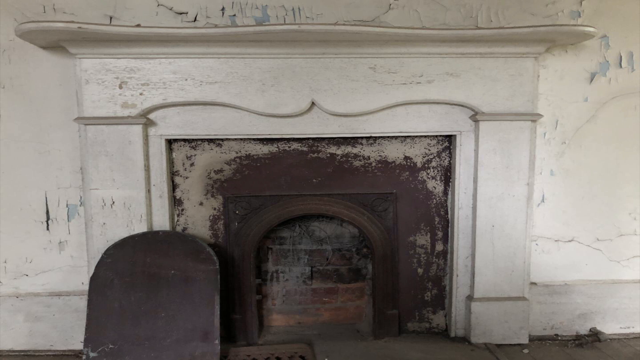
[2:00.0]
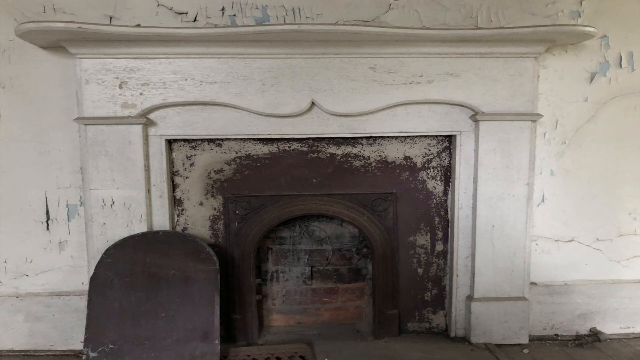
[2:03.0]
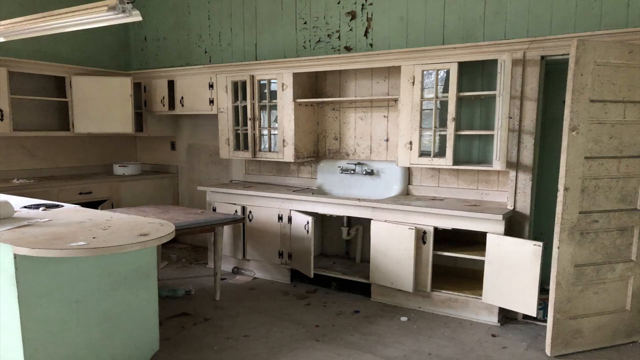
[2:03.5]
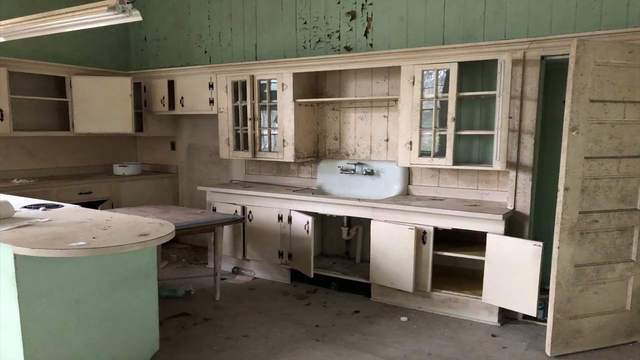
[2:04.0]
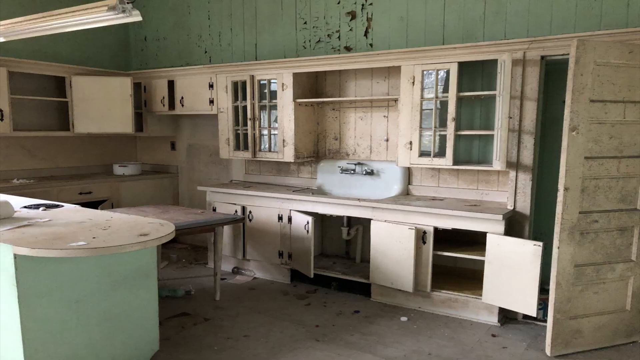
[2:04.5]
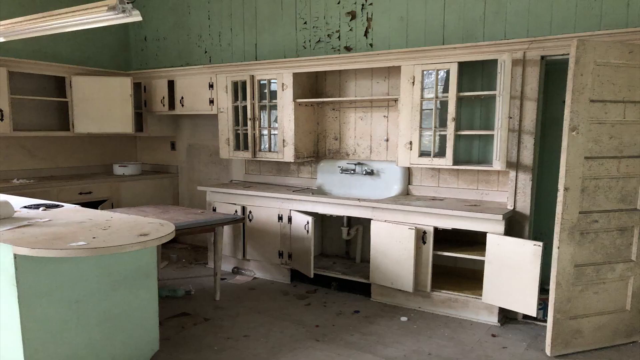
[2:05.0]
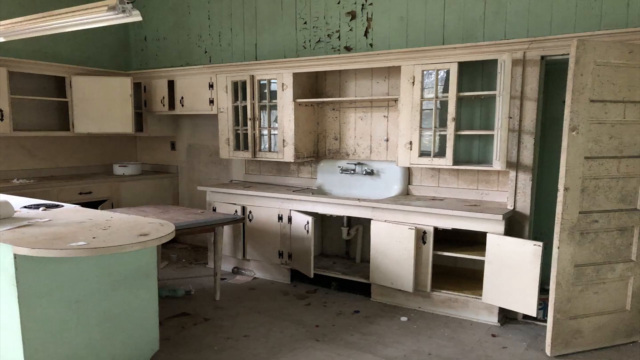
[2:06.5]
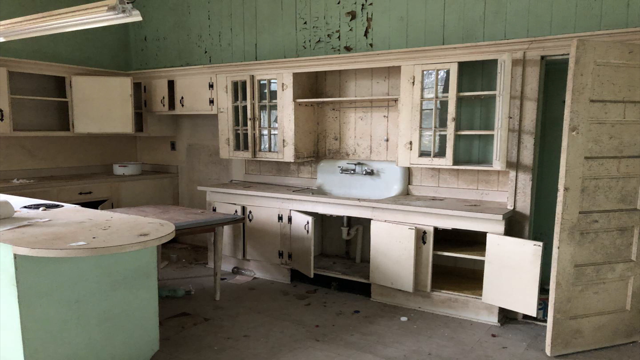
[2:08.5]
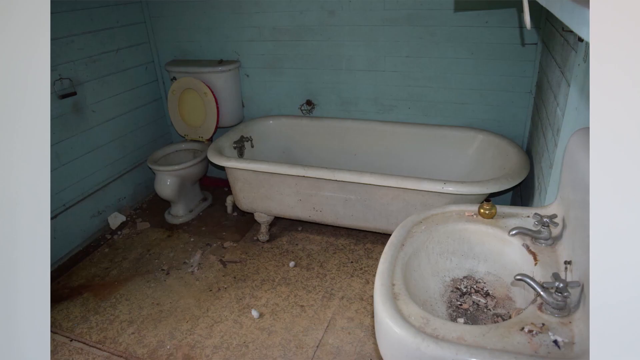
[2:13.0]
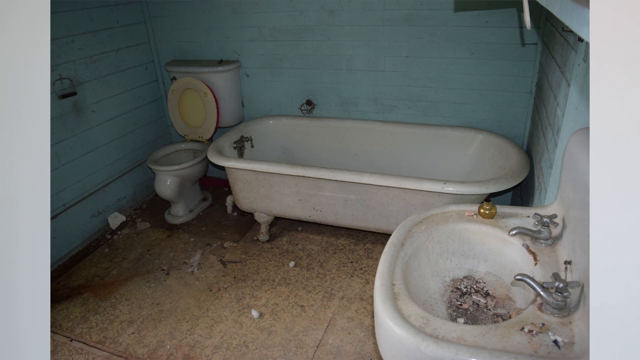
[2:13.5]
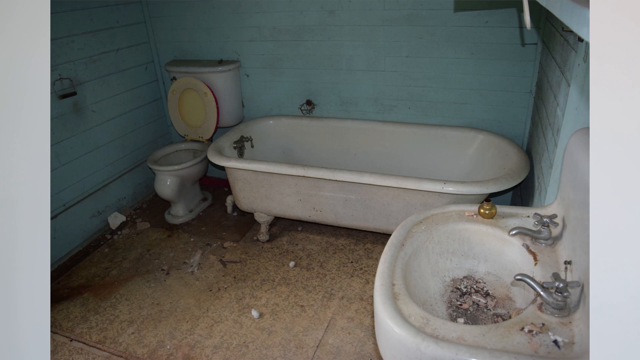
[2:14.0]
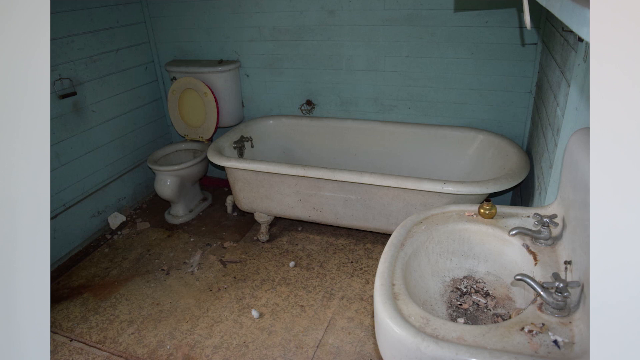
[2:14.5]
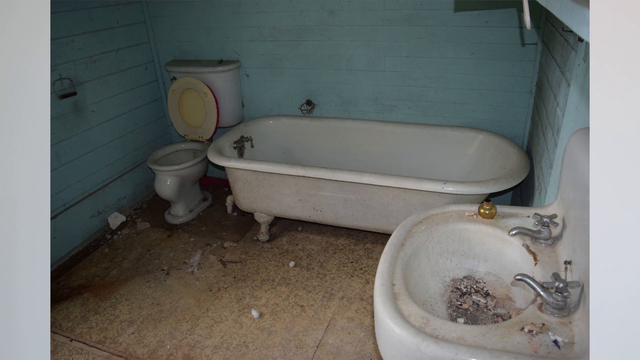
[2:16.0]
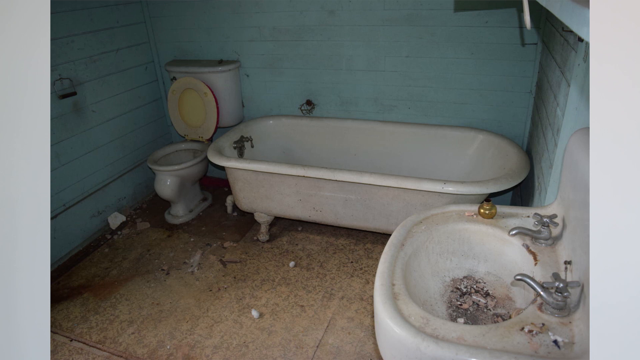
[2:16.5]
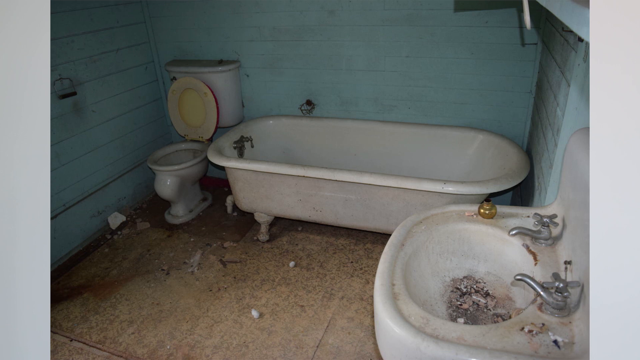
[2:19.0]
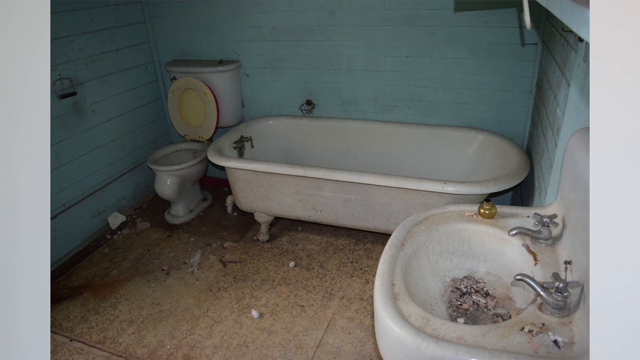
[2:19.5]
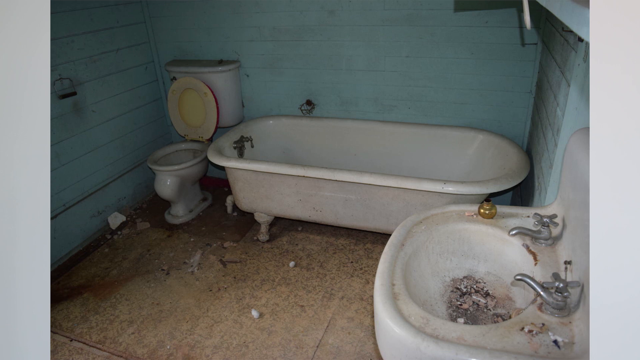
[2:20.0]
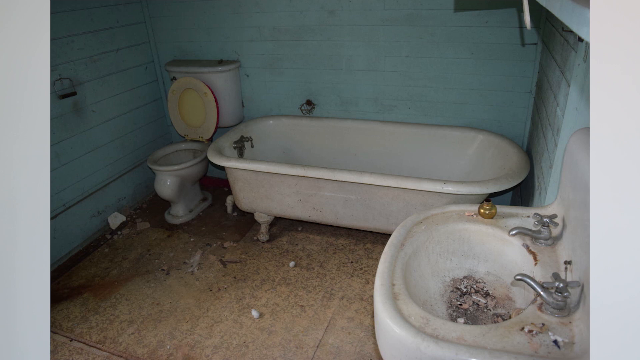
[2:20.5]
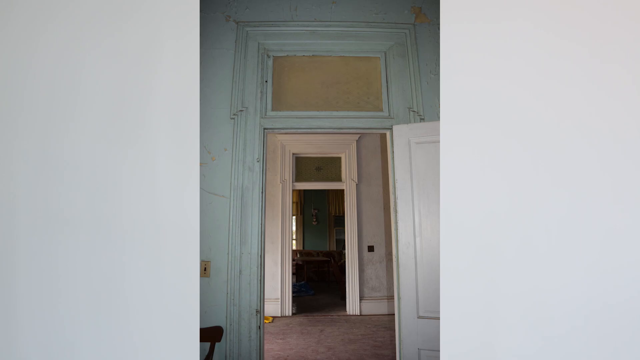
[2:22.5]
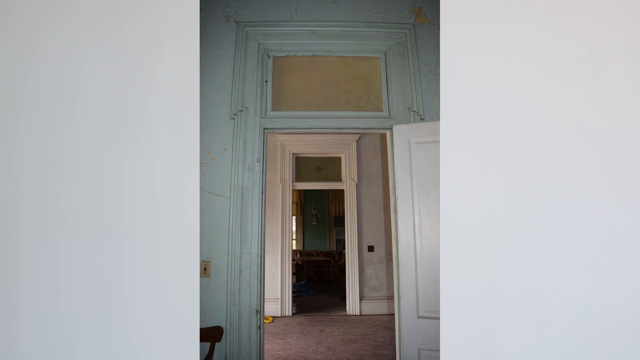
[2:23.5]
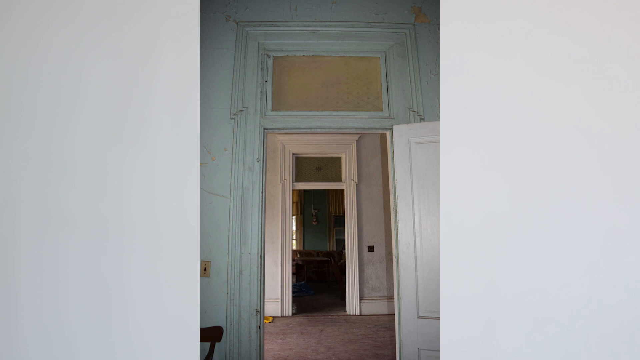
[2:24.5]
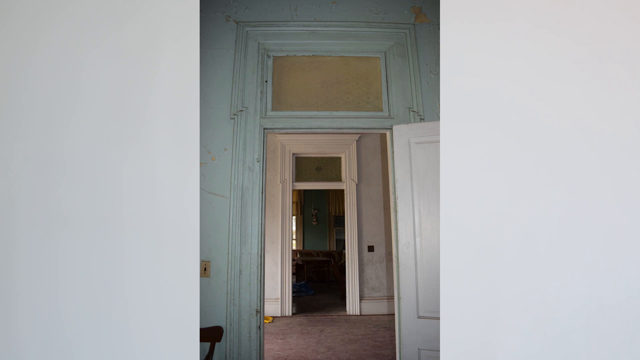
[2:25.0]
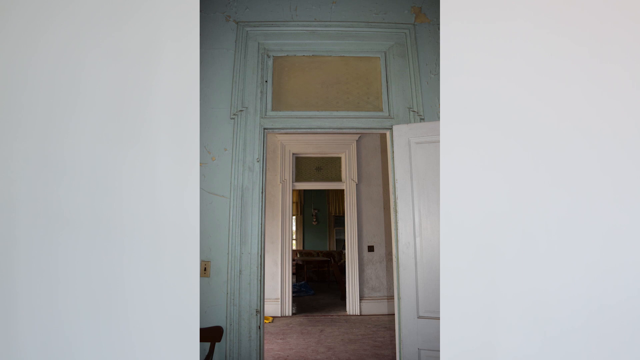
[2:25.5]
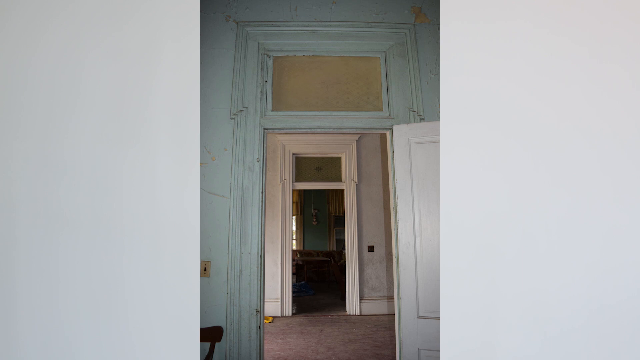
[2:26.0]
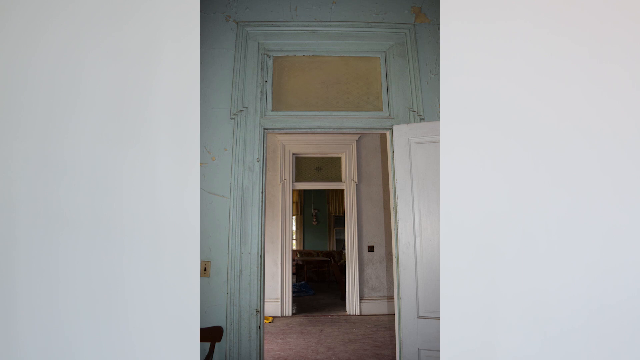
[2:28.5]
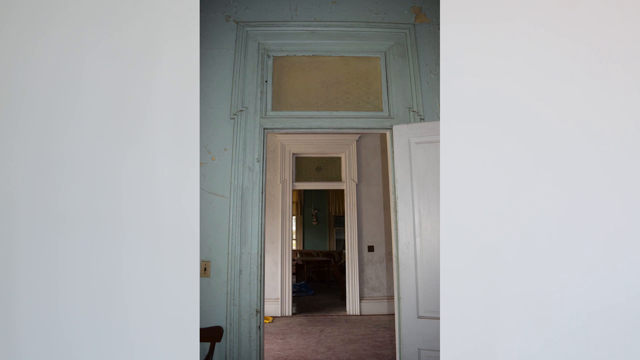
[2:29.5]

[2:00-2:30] A picture shows a fireplace in a white wall with a white mantle. Around the square fireplace, the brown frame has a lot of chipped and worn-down paint. Inside, the background is a wall of bricks, and placed aside to the left of the fireplace is what looks like a dark brown door or cover resting against the wall. Next is a picture of a large kitchen with green walls and tan countertops and cabinets. There is a large long white sink and about six cabinets under the long countertop it is attached to; some cabinet doors are completely open, while on others just one door is open or cracked. Cabinets with wooden frames and glass windows are above the sink to the left and right, with more cabinets to the left. There seems to be a square brown wooden table standing in the middle of the kitchen, and to its left is an island with green sides and a white rounded rectangular top. The kitchen looks very worn down, with a lot of peeling paint, some debris on the floor, and walls that look kind of dirty. Then comes an image of a bathroom, a small square room with light blue brick or paneled walls. There is a white bathtub standing on four small legs, a small white circular sink to the right that looks like it has dust or rocks sitting in the bottom, and a small toilet to the left of the bathtub with its seat up; the seat looks kind of yellowed. What look like broken rocks or bricks are sitting on the floor. Finally, an image shows a doorway in a very light bluish-white wall. There seems to be a square window above the doorway that looks filled in with light brown cardboard. A white door is open in the doorway, revealing a large hallway and, across it, another room with brown leather sofas, green walls, windows with yellow curtains, and a small silver statue hanging on the wall.